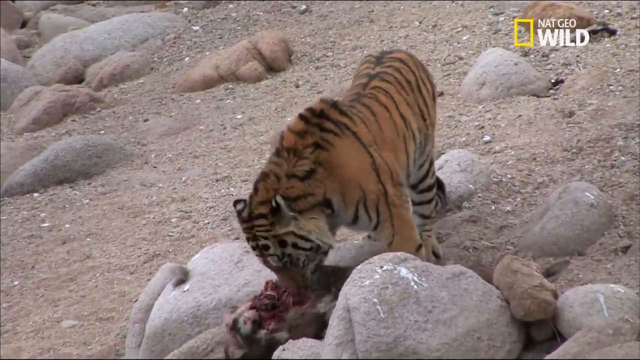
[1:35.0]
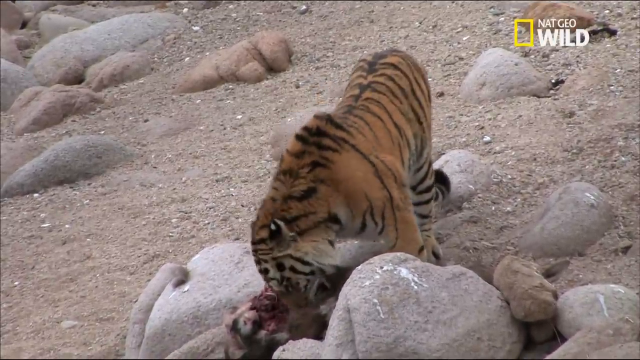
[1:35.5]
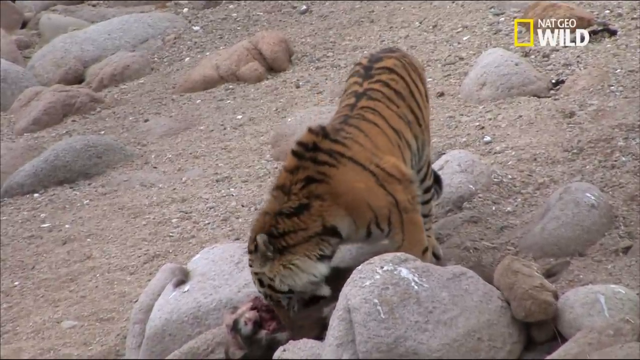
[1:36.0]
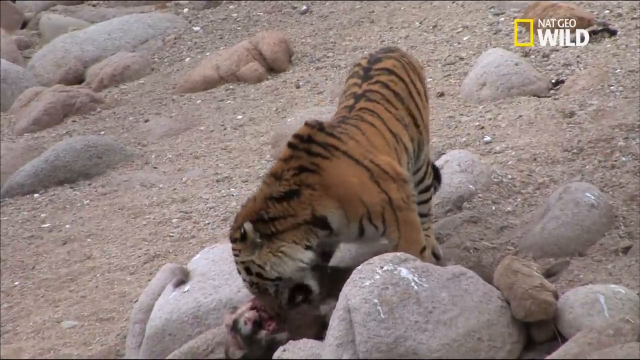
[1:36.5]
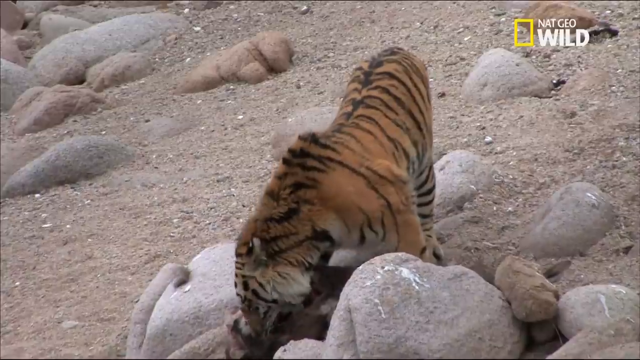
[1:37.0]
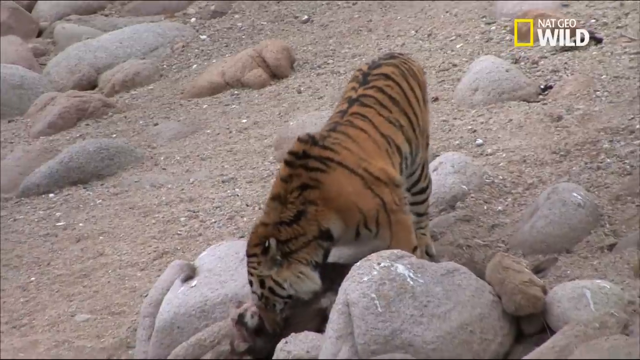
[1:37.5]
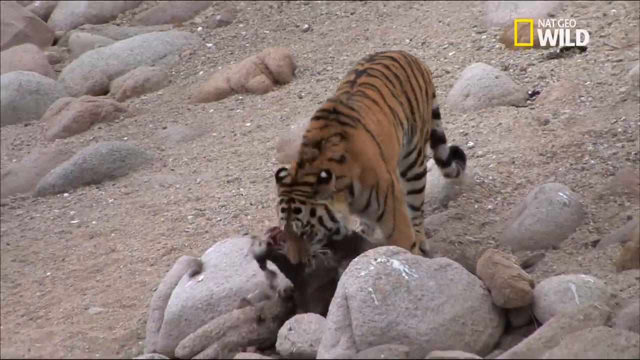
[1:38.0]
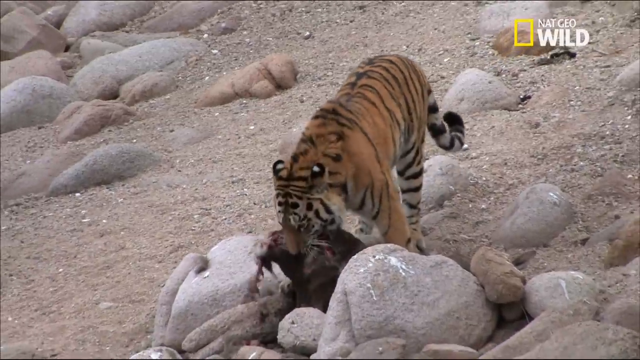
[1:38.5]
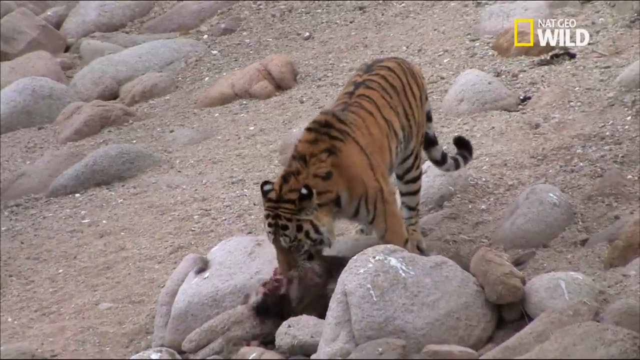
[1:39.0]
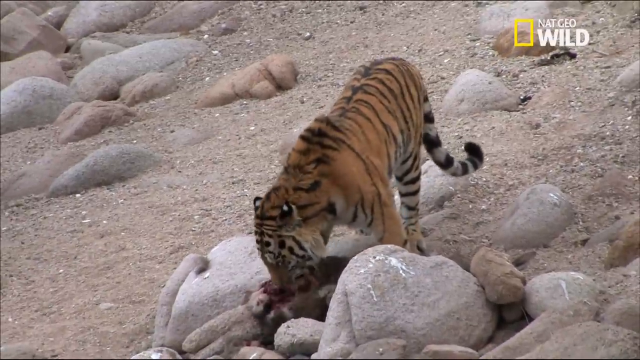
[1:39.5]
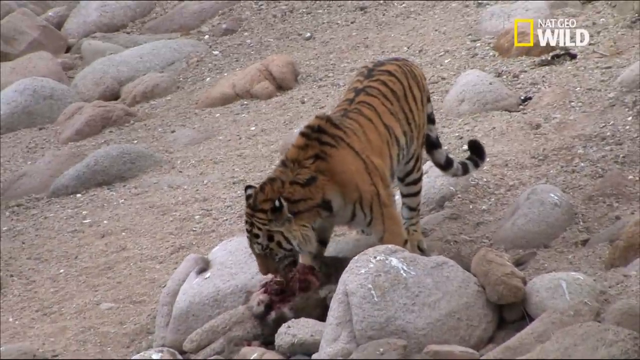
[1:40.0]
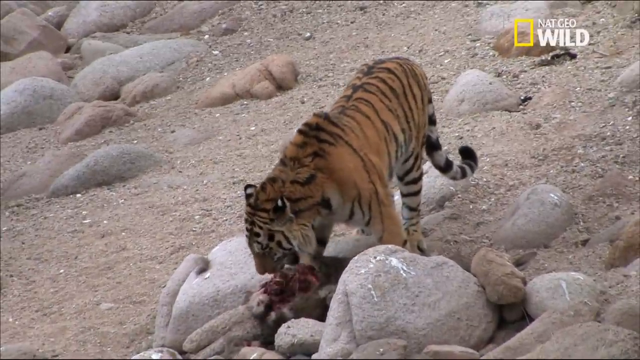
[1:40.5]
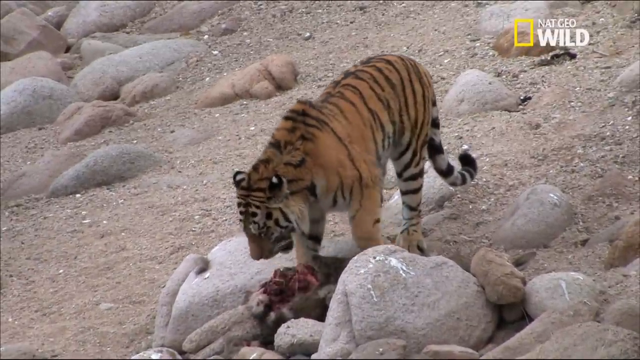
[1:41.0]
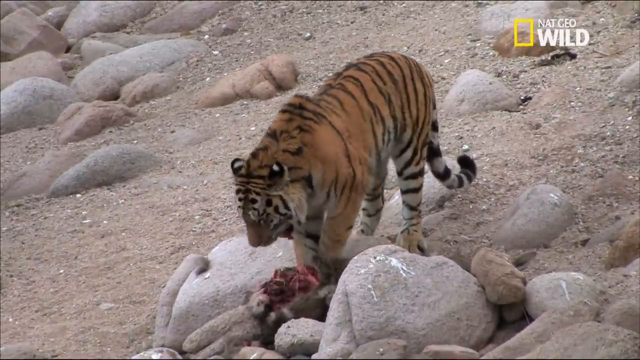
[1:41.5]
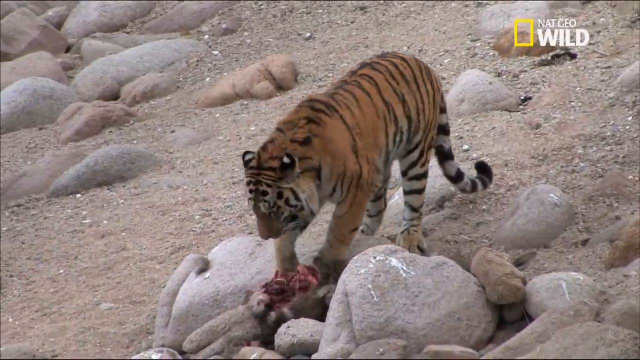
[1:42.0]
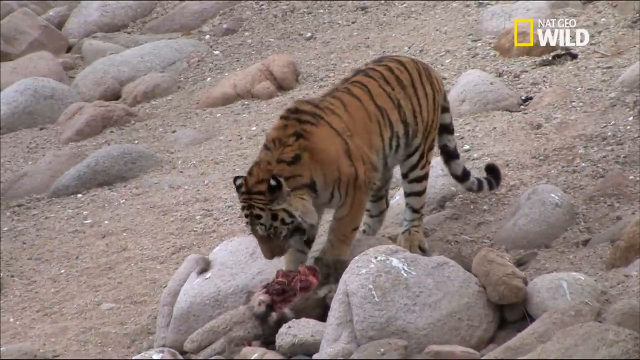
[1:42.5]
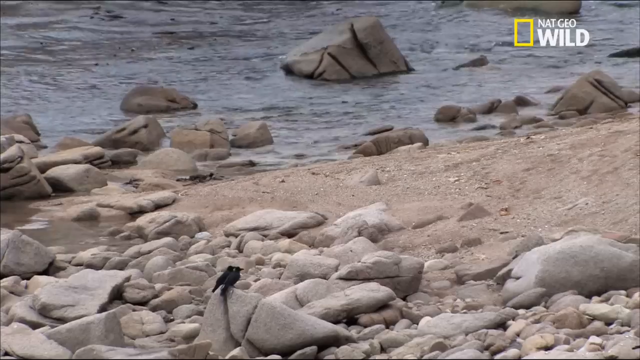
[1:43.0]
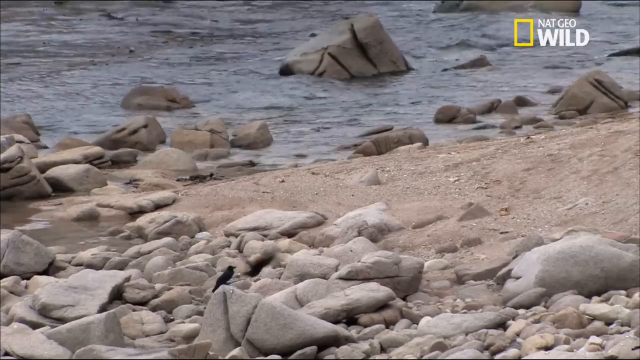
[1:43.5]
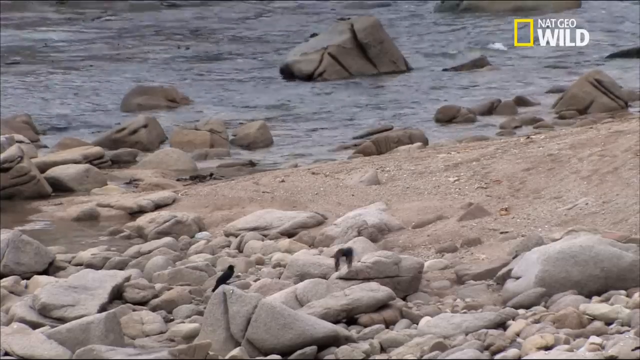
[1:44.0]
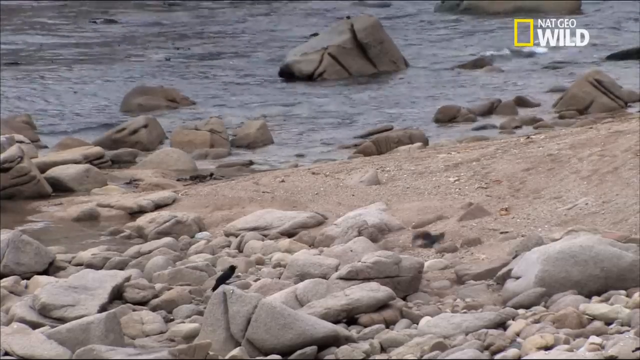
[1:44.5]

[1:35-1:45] The tiger continues eating the bird, still standing on the two gray rocks, and seems to have eaten much of it; its head shakes around as it takes bites. The camera pans out to show two other birds: one flies to the right while the other stays sitting on top of the rock. The birds seem to be not far from the tiger, watching as it eats, seemingly hoping to eat what is left, though the tiger seems to be eating every bite.